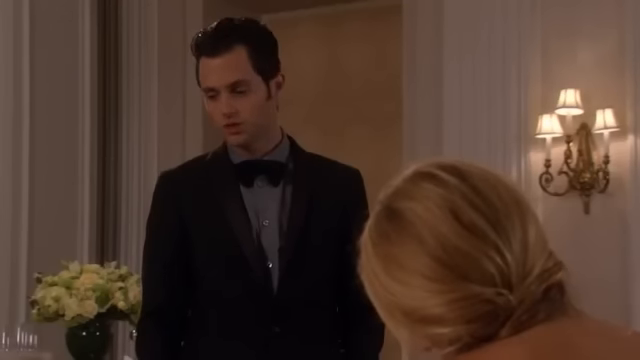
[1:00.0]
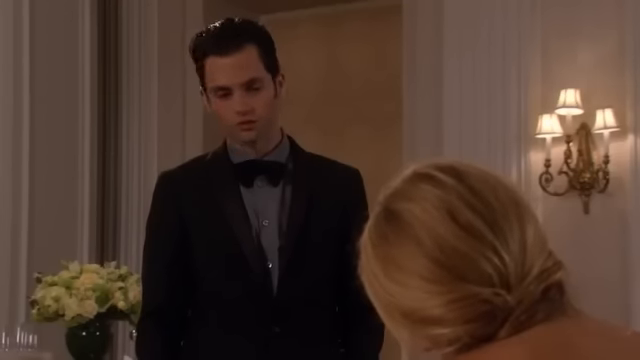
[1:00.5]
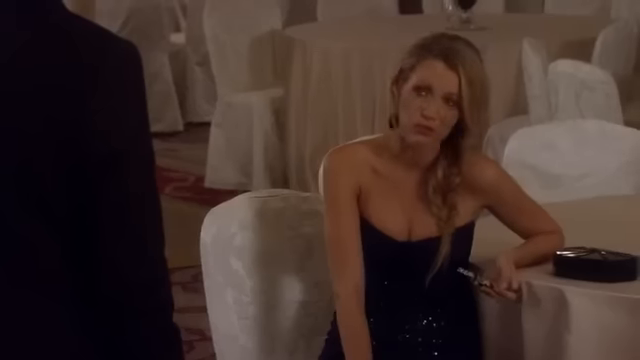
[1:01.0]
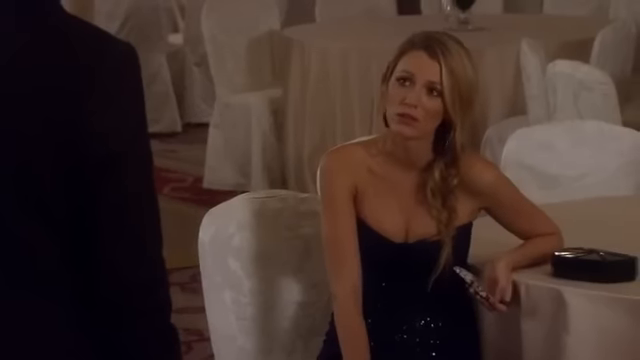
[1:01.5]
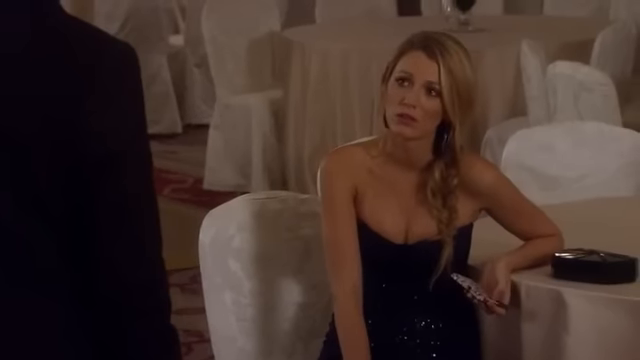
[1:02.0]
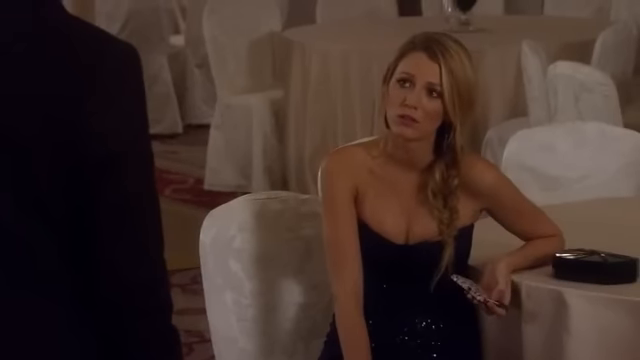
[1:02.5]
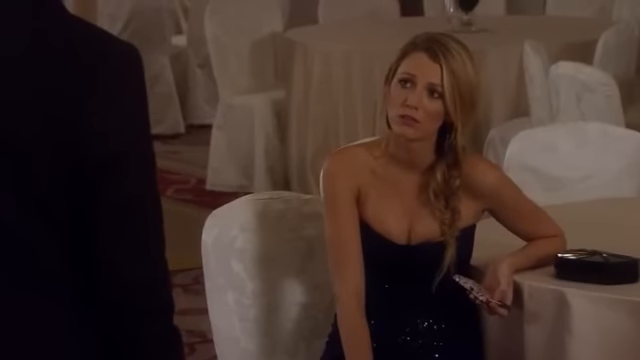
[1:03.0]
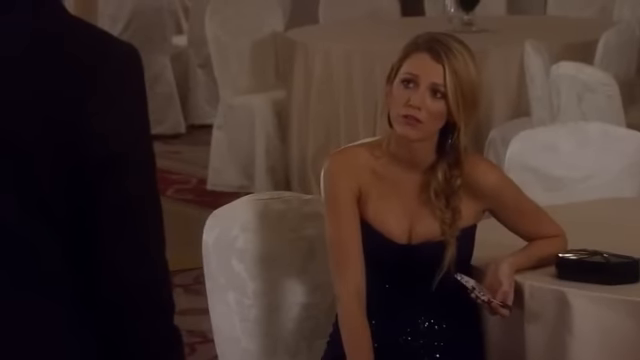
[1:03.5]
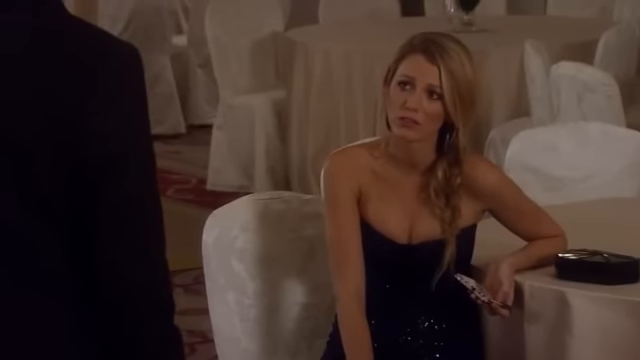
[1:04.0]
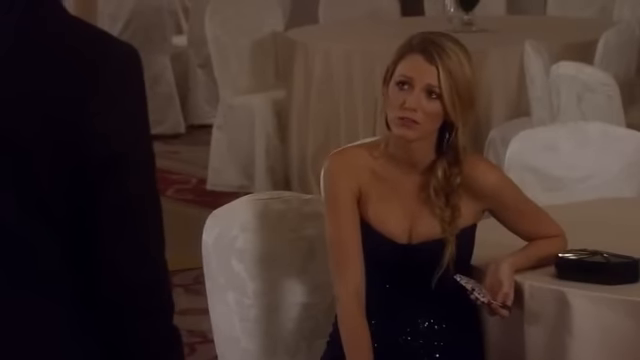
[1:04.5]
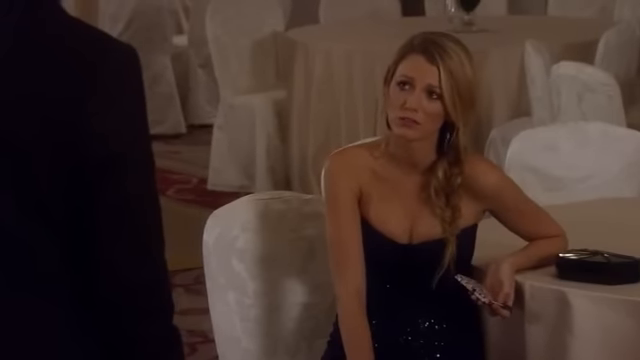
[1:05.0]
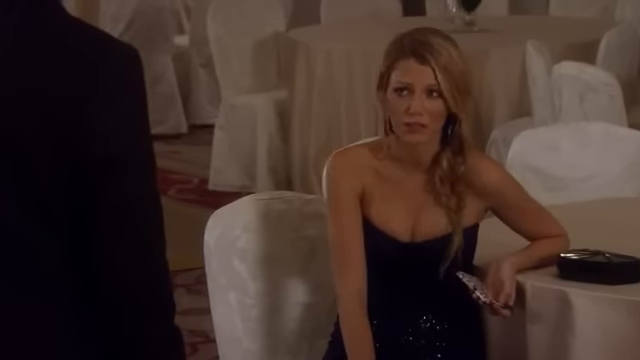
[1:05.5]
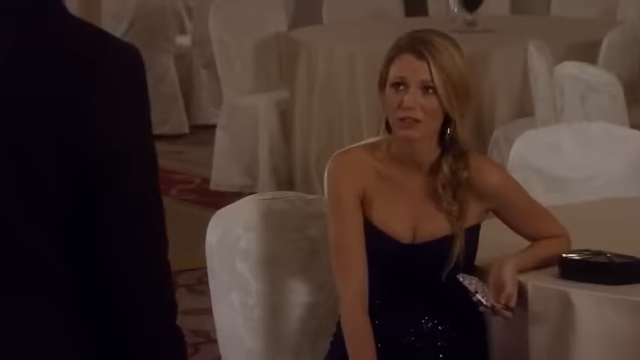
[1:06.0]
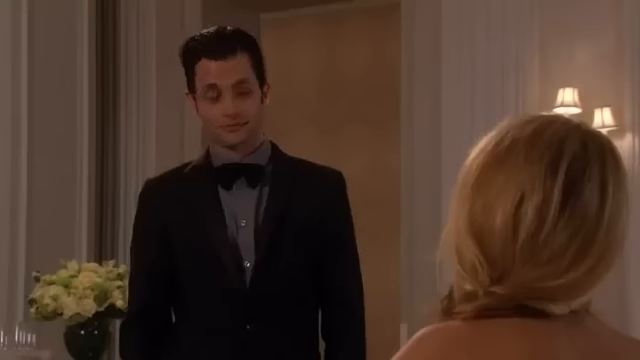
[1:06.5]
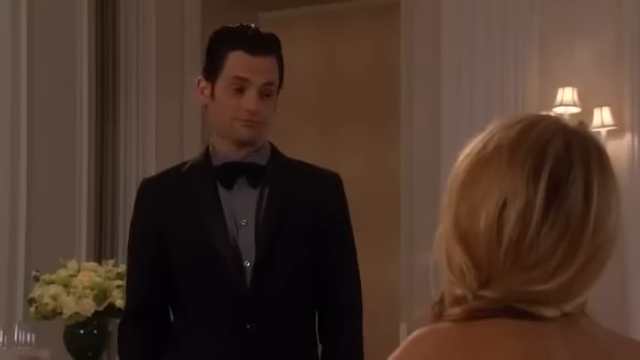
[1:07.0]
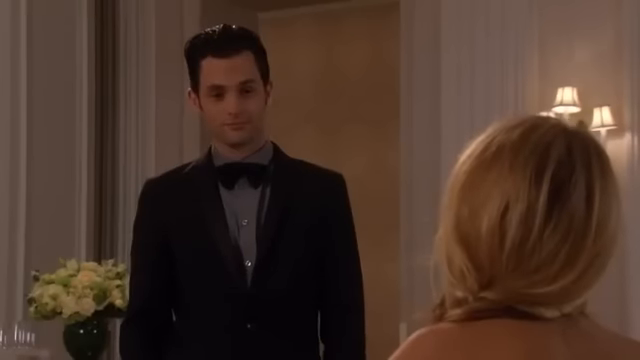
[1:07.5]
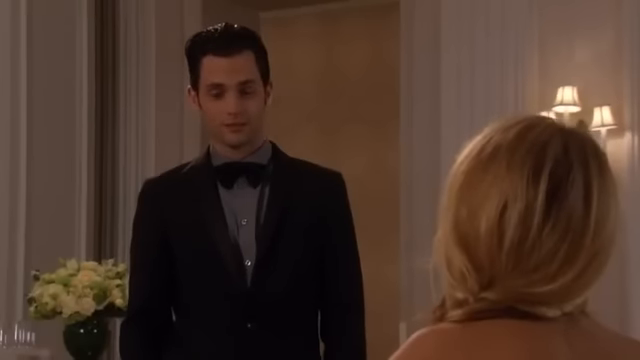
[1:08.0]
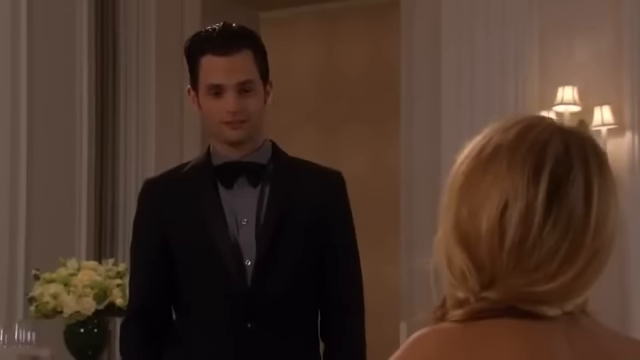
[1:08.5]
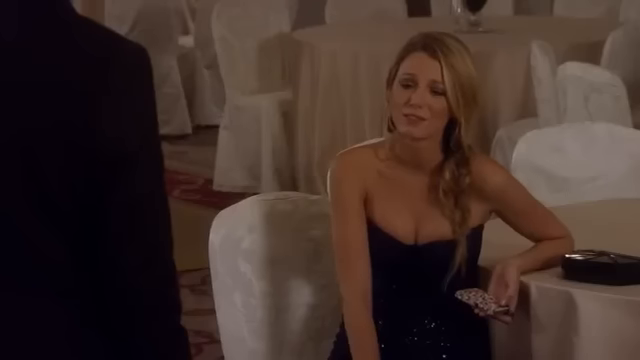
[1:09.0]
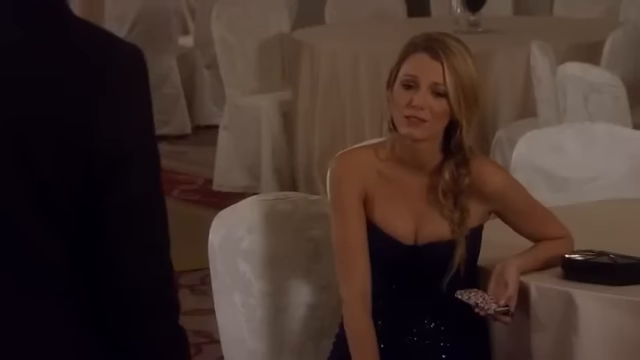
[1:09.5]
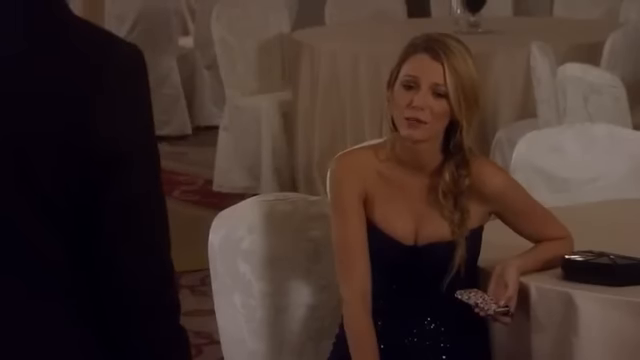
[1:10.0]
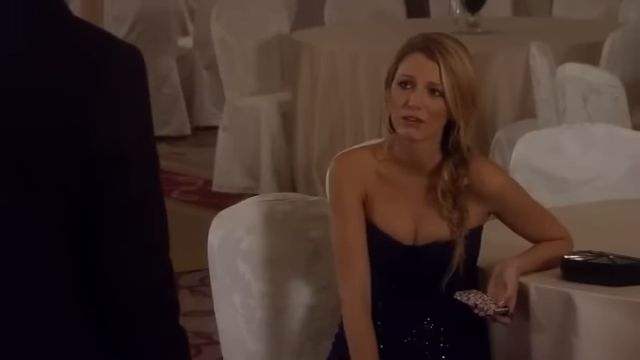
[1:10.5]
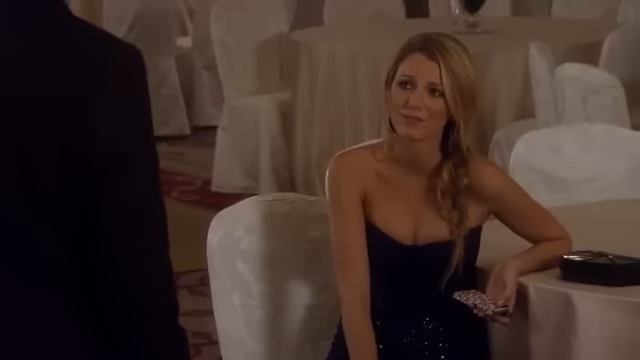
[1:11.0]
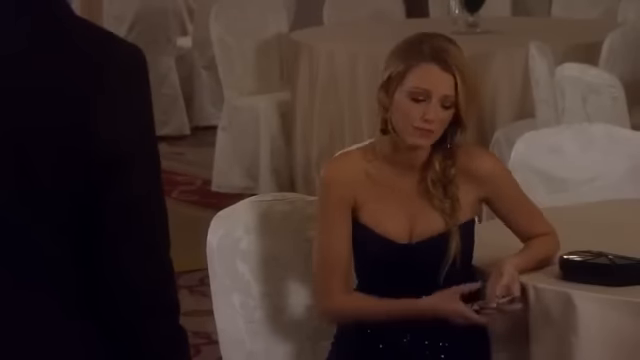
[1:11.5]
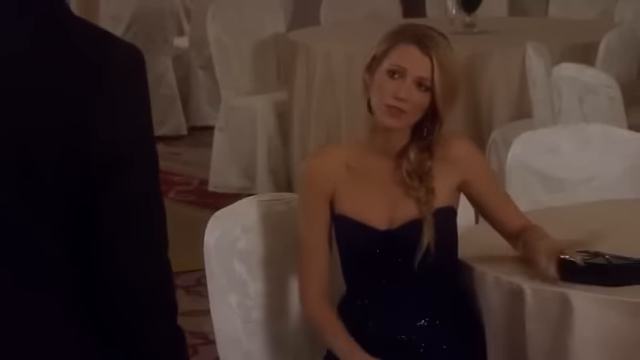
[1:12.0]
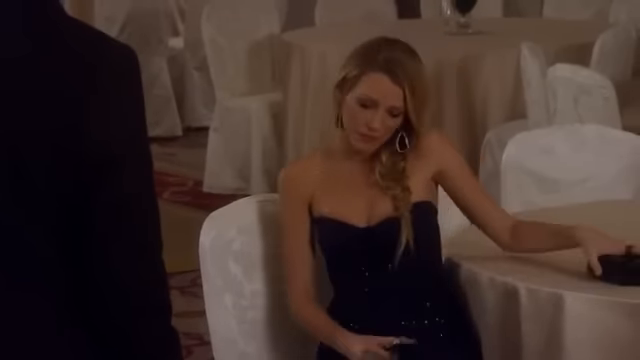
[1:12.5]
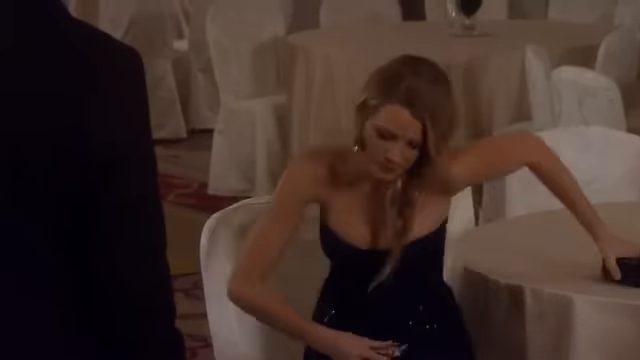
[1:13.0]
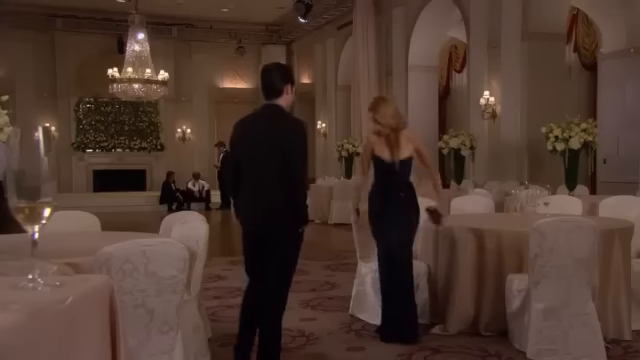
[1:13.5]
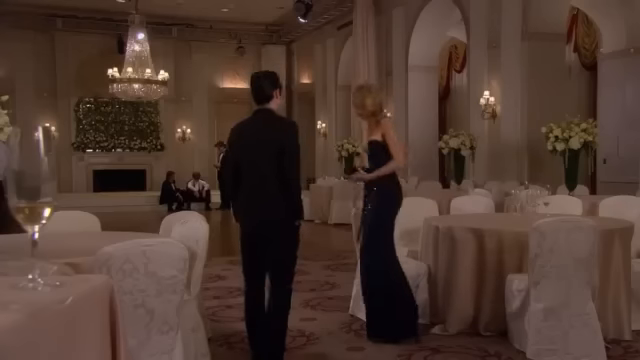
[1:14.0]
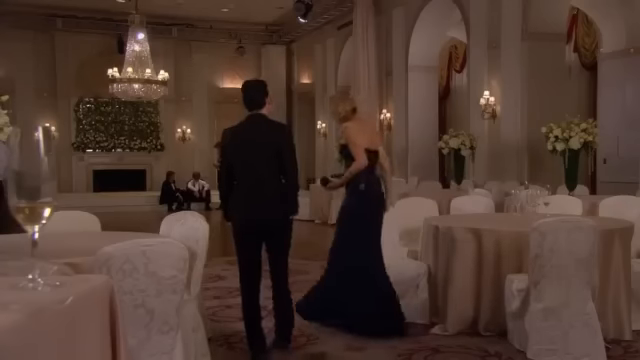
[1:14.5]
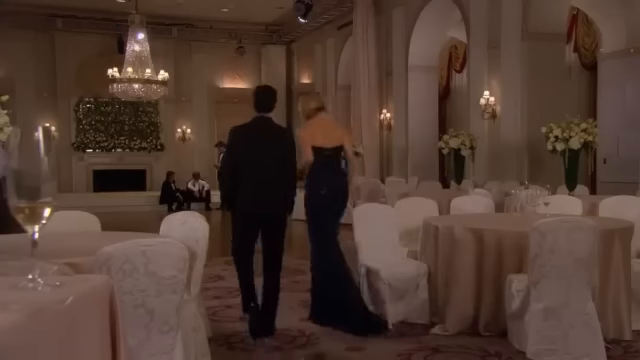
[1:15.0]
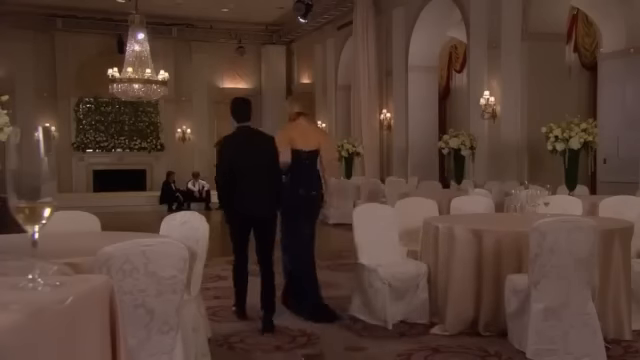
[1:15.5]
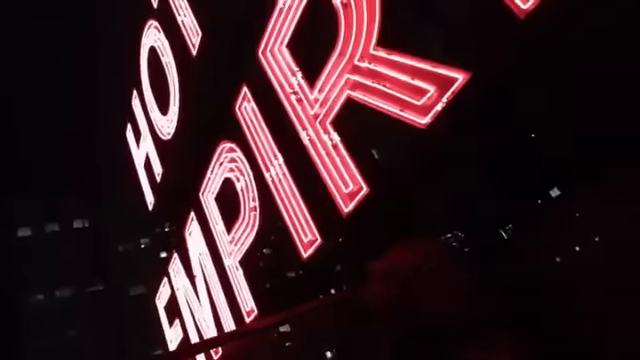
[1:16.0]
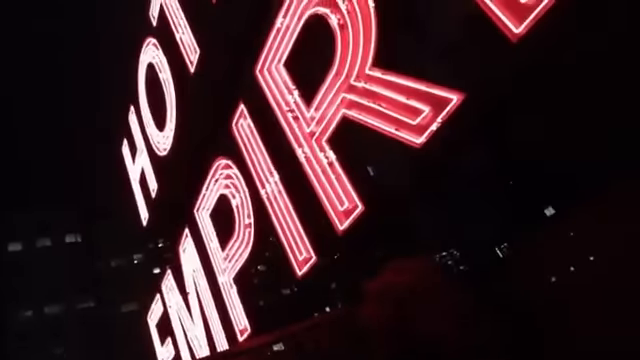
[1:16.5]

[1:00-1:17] A woman and a man appear; the woman wears a really long dark blue dress. Behind them are many tables with chair covers and a cover on a table, with flowers at the center of the tables. There is a flower decoration and many lamps, suggesting a hotel. On the left side there is a glass of champagne. The woman holds a phone in her left hand, with her black purse close to her left arm. The man wears a suit with a dark blue shirt. At the end, they are leaving.